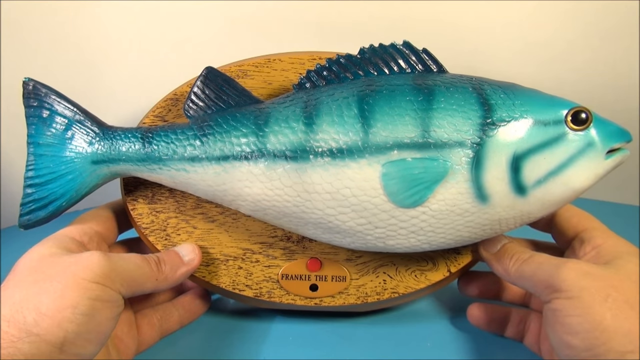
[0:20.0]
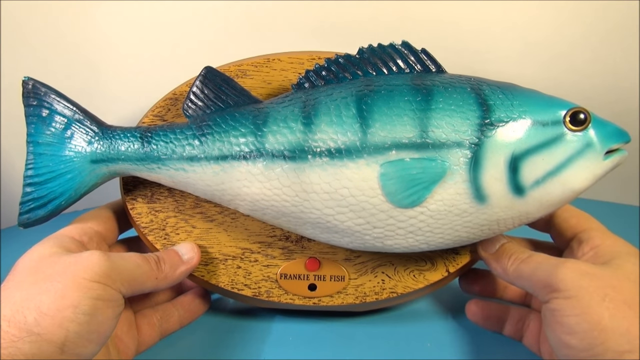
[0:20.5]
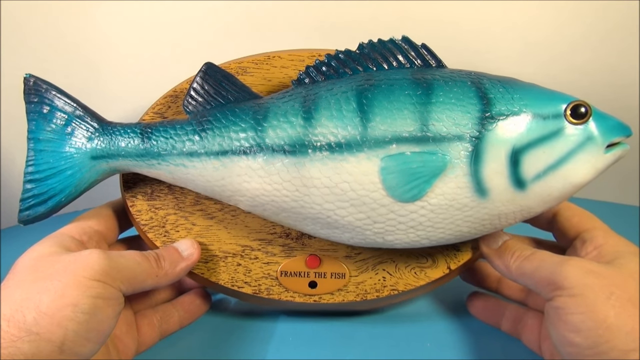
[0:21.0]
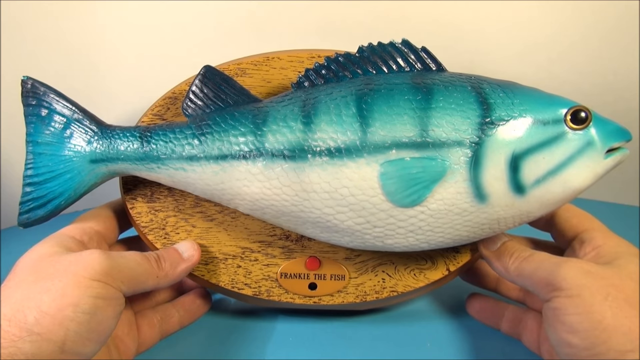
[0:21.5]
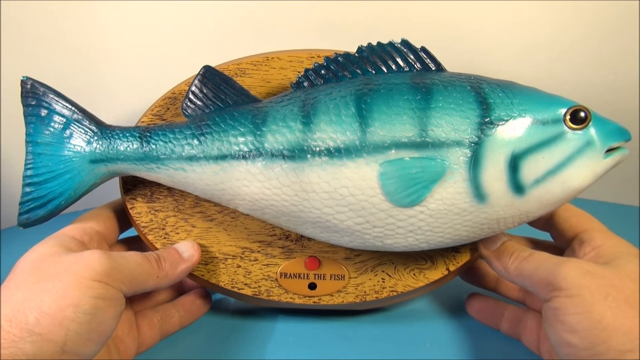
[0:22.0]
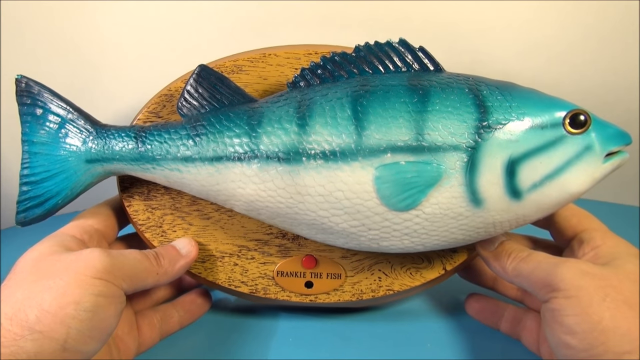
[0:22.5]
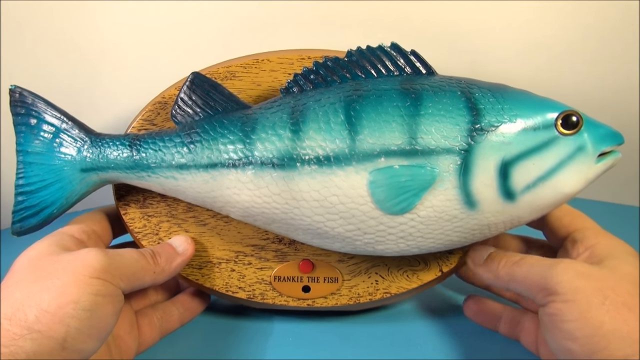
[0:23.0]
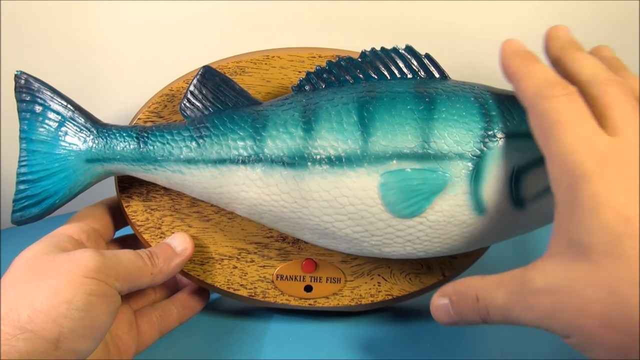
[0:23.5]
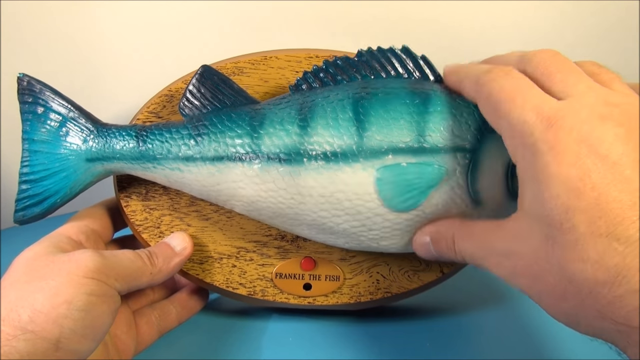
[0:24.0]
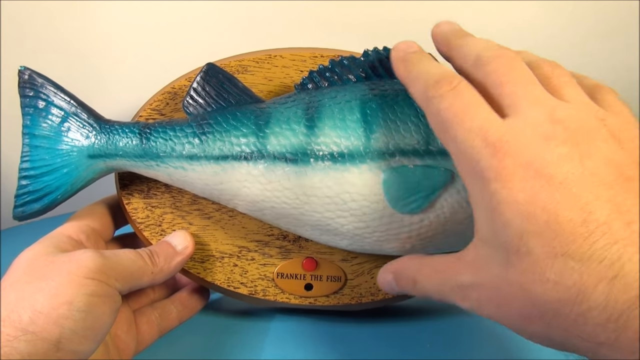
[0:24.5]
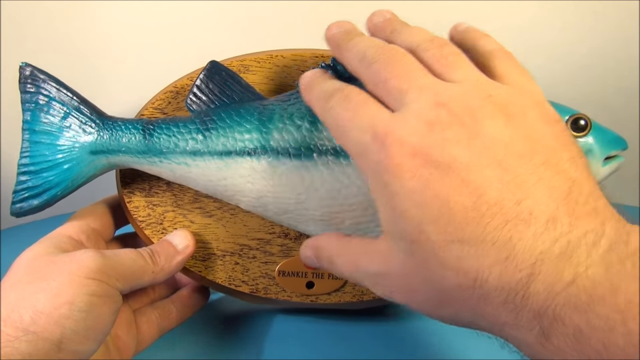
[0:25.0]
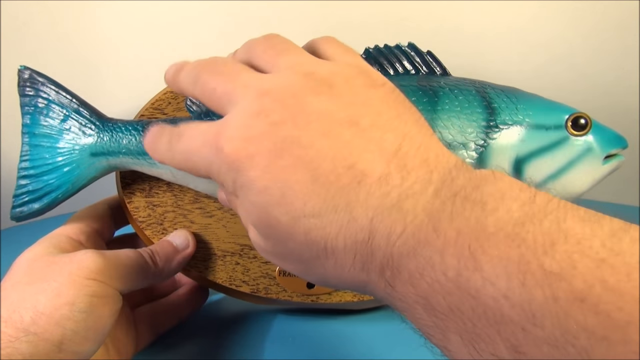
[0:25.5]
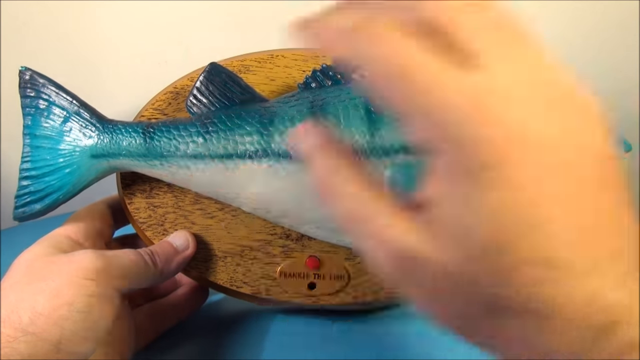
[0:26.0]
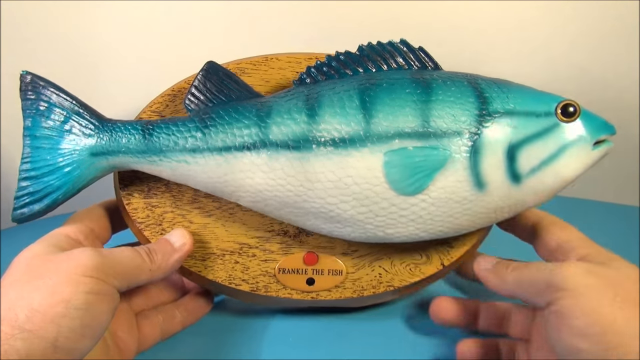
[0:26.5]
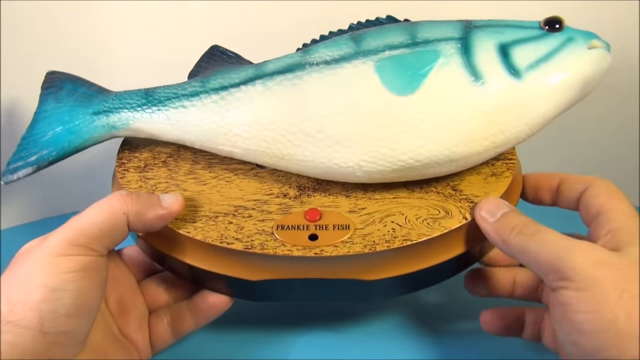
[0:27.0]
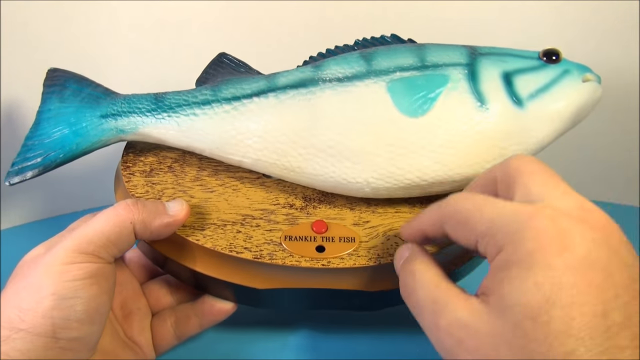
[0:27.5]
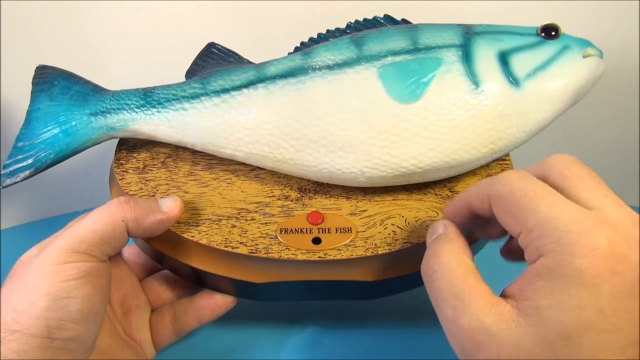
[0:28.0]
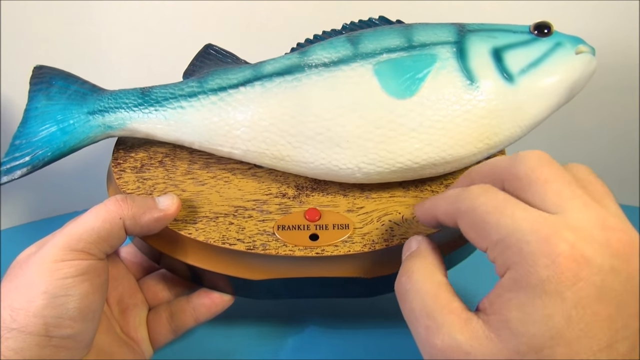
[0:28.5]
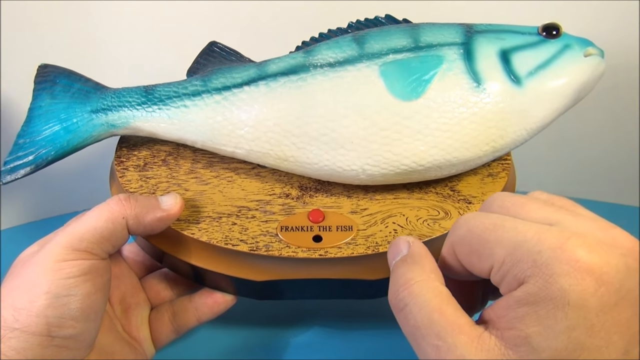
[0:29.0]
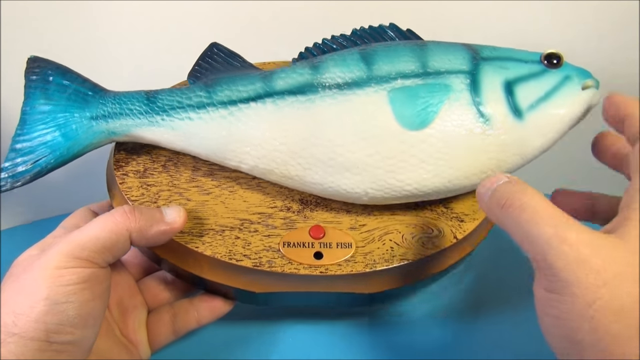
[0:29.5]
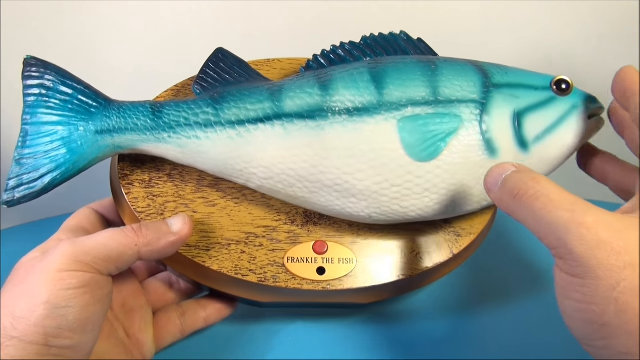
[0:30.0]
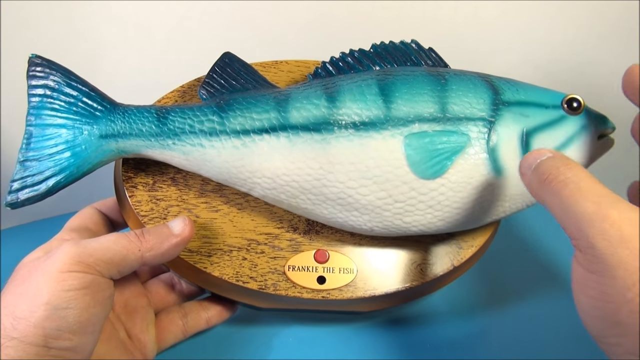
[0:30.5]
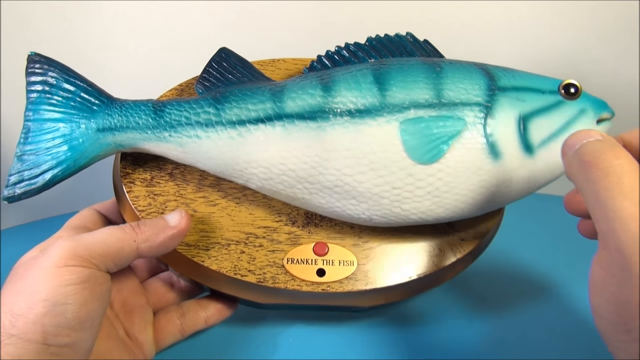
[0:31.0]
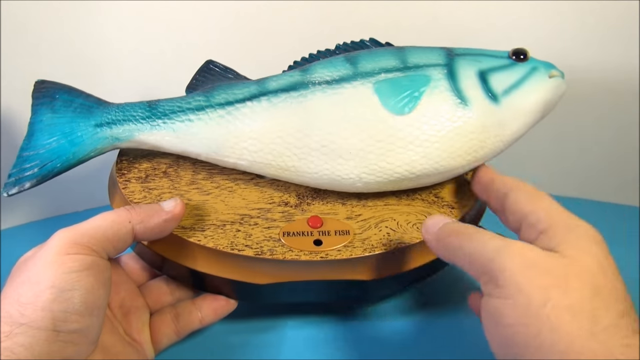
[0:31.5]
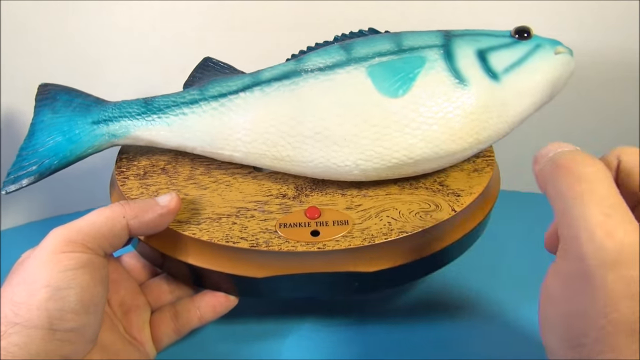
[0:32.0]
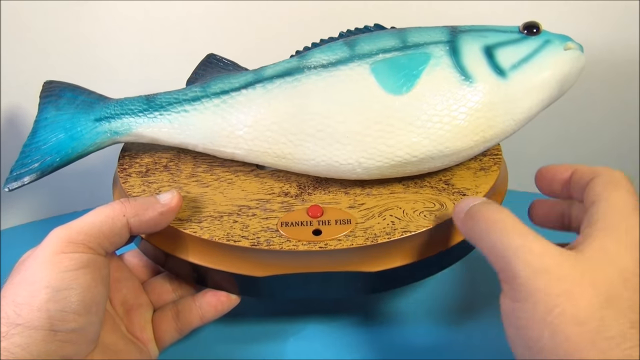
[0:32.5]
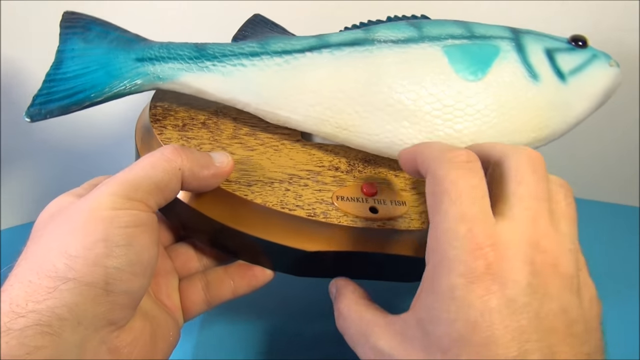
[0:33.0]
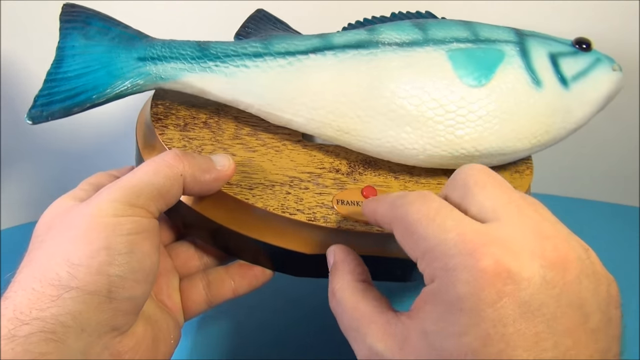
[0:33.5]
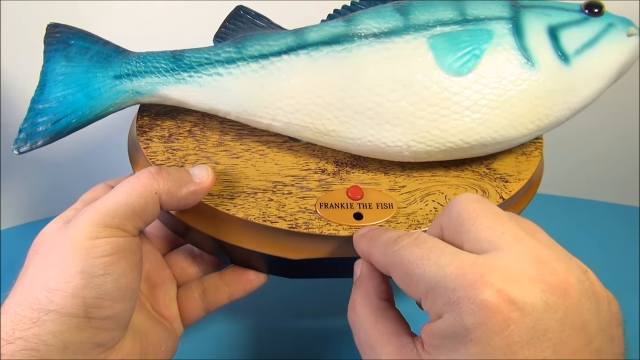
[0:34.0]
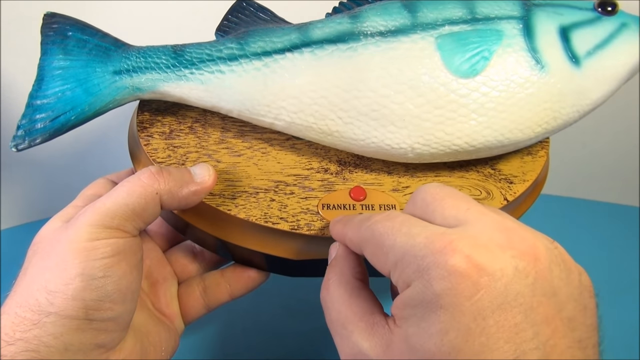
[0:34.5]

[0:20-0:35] The fish has been taken out of the box. It is mounted on an oval that looks like a piece of wood but is plastic. Below the fish, "Frankie the fish" appears on a small plate, with a red button above the name, presumably pressed to make the fish sing. The person holds the head of the fish with their right hand and the wood-looking oval mounting plate with their left. The light brown oval plate has small dark lines that look very much like wood grain throughout. The fish is not moving; it is attached on its side to the mounting plate and being held. The person squeezes the fish, showing it is very rubbery, taps the mounting plate, turns it slightly flat and back over, and points to the button that makes the fish sing.